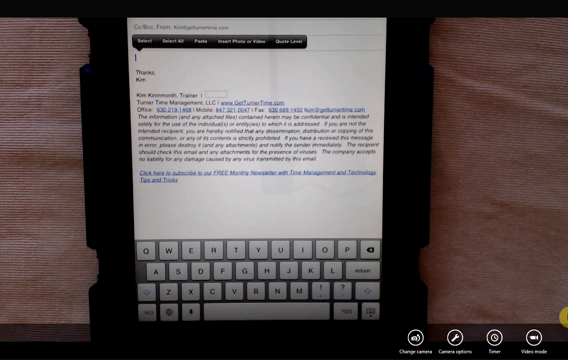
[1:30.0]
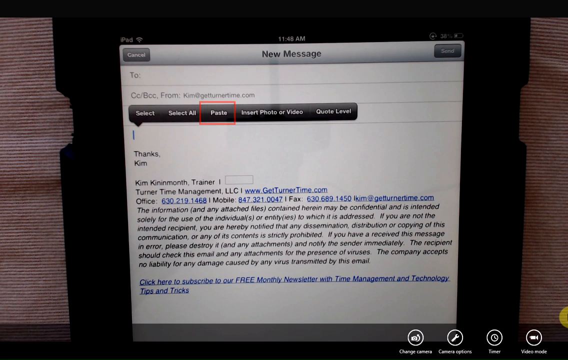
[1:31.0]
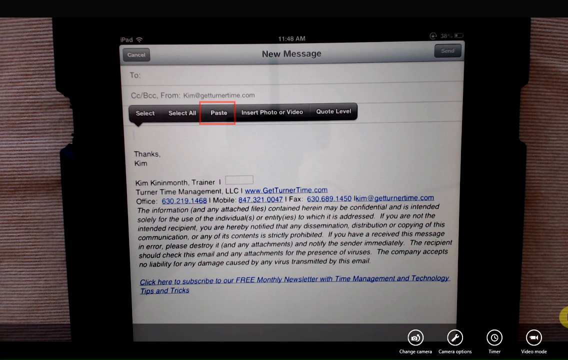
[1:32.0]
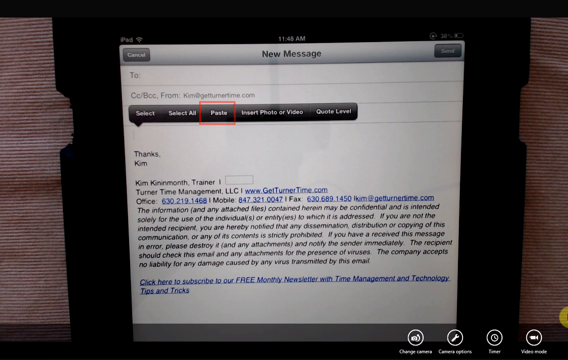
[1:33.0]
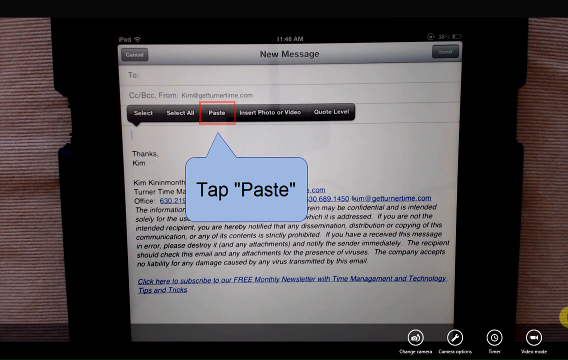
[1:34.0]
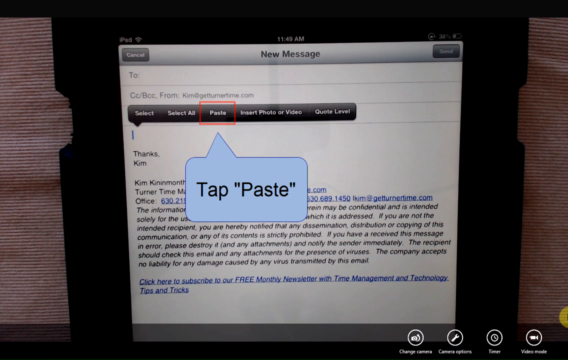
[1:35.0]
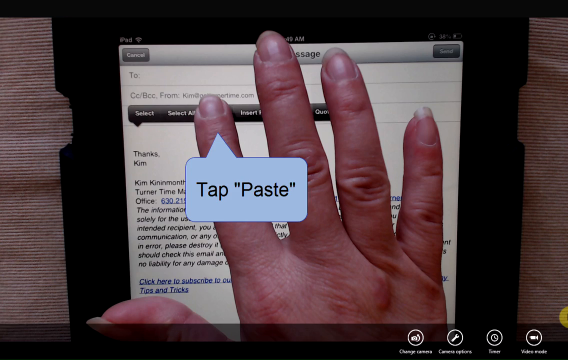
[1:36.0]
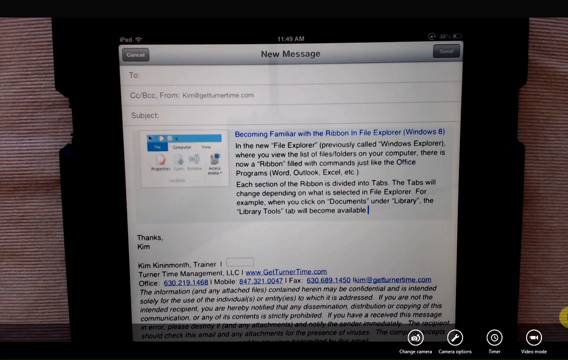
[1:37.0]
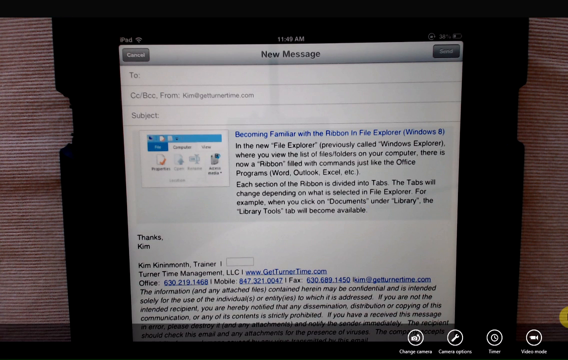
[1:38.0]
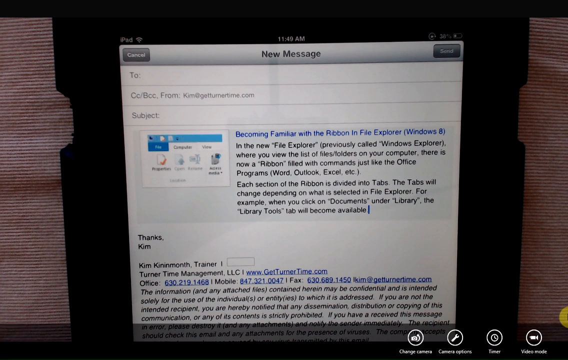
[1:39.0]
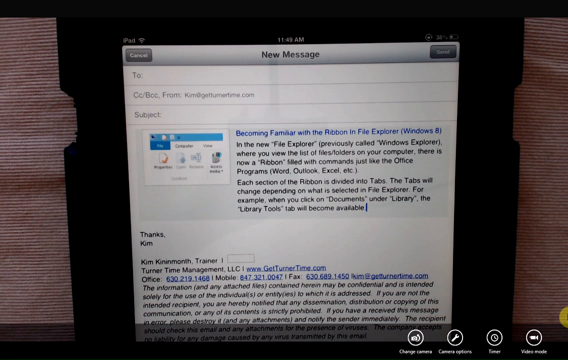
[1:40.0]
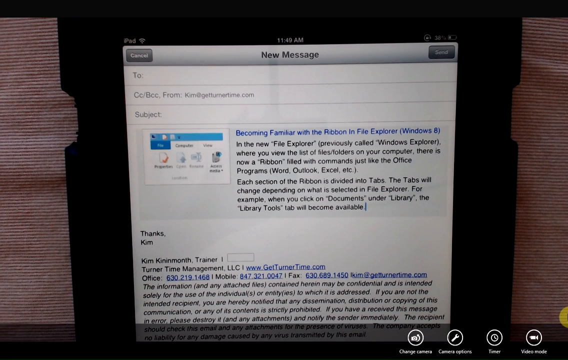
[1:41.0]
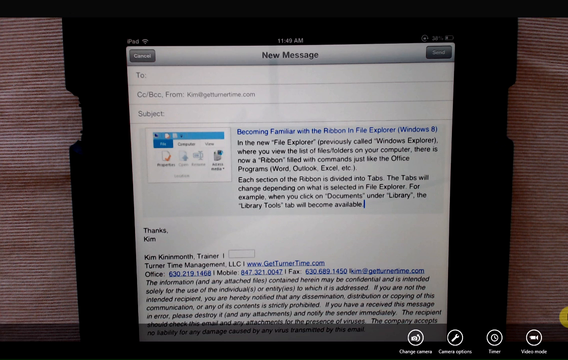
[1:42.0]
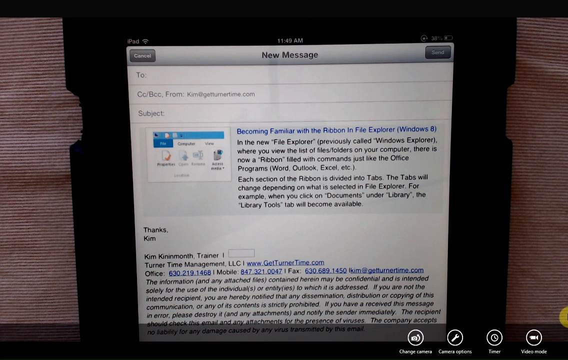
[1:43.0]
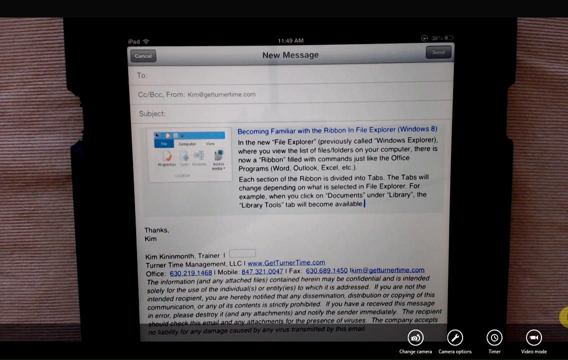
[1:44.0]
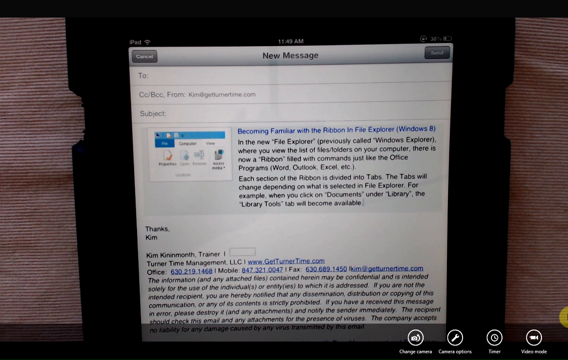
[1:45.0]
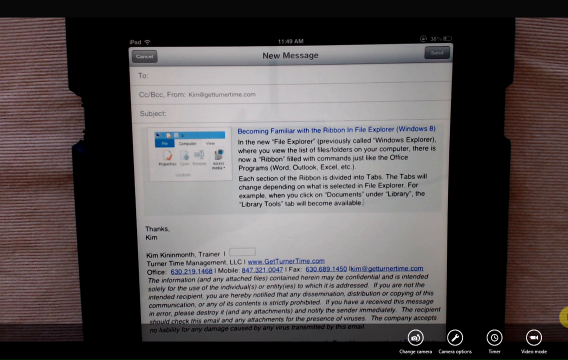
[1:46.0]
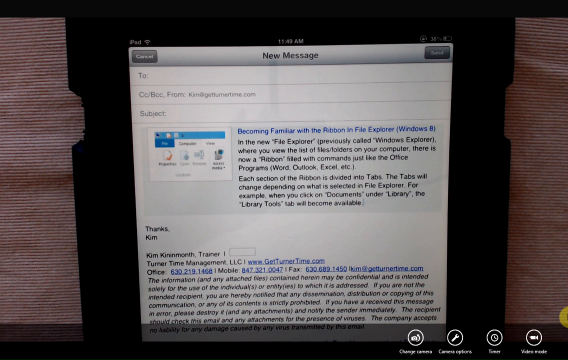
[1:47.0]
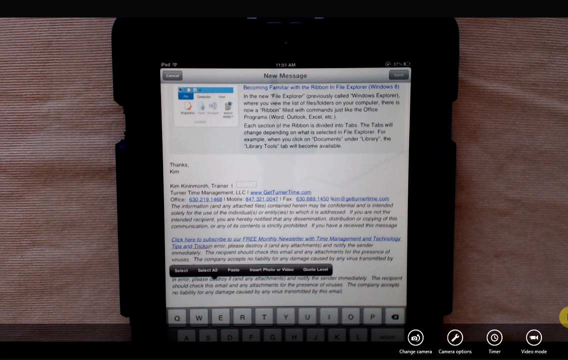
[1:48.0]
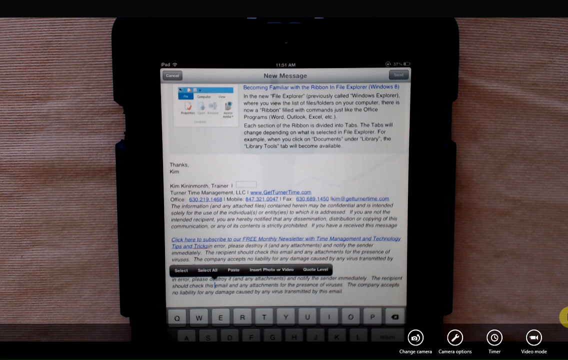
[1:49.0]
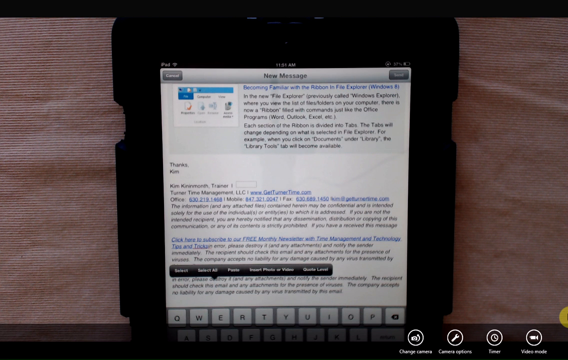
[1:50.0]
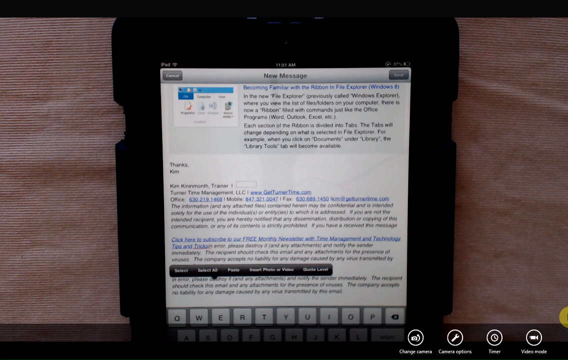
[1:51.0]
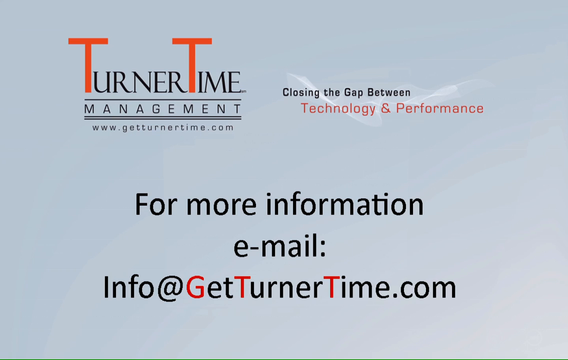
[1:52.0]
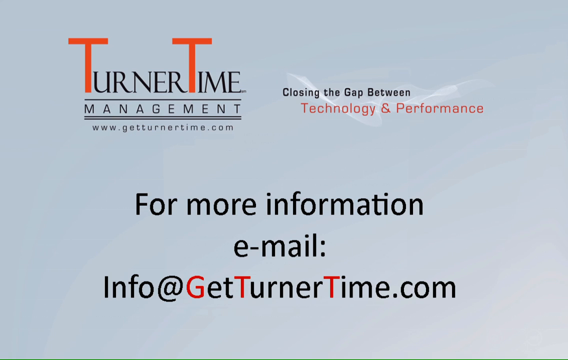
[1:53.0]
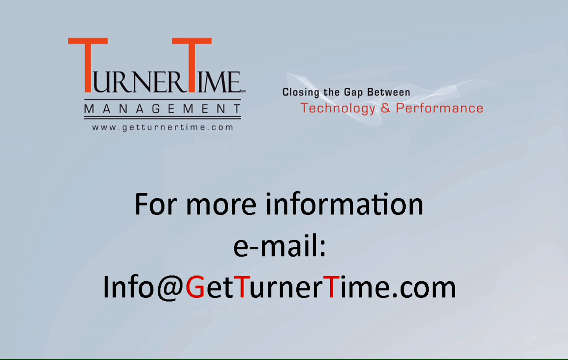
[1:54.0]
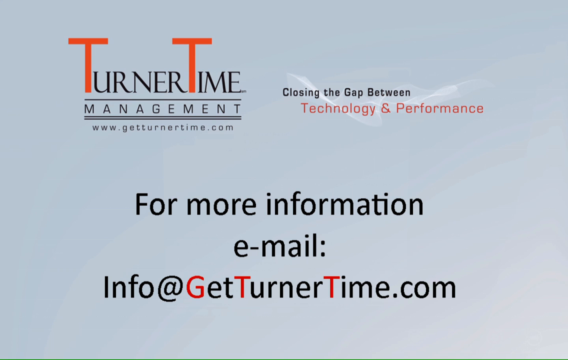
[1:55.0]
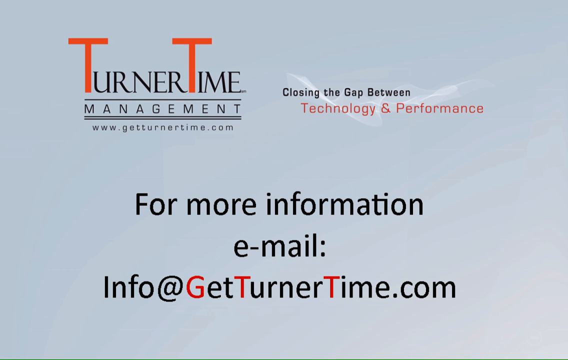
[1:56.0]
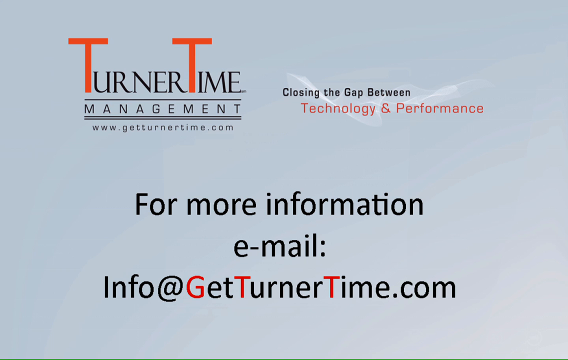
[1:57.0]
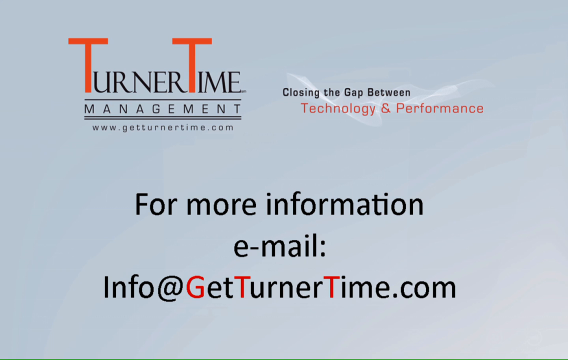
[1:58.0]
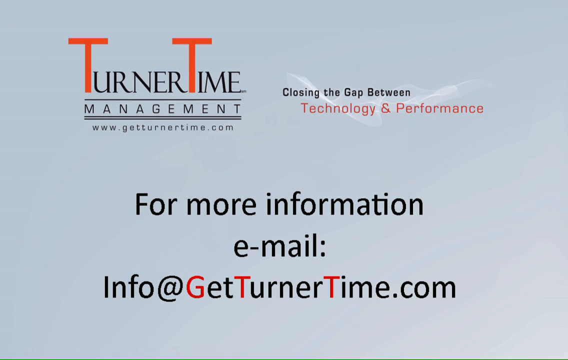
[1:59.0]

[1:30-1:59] The paste option is highlighted in red, and text says "tap paste." The whole paragraph is then pasted into the email. An outro follows with the text "for more information, email info at getturnertime.com." The Turner Time Management logo appears with "www.getturnertime.com" and the tagline "Closing the gap between technology and performance."